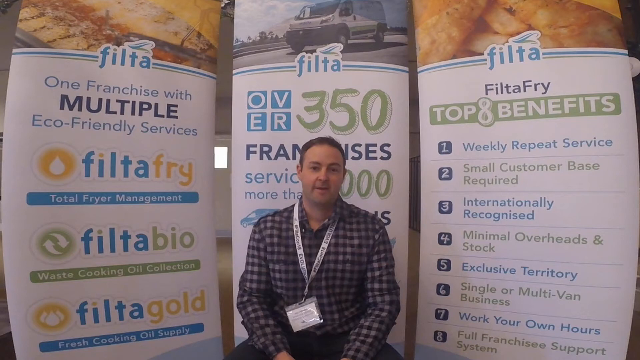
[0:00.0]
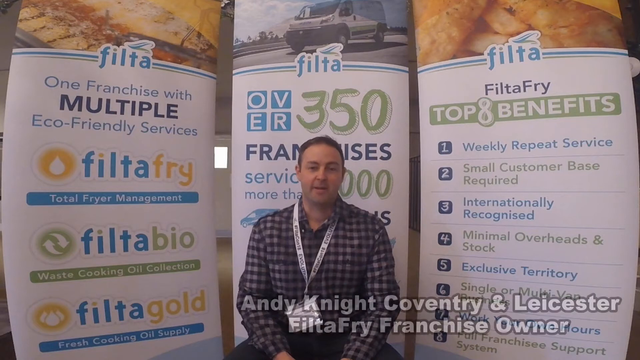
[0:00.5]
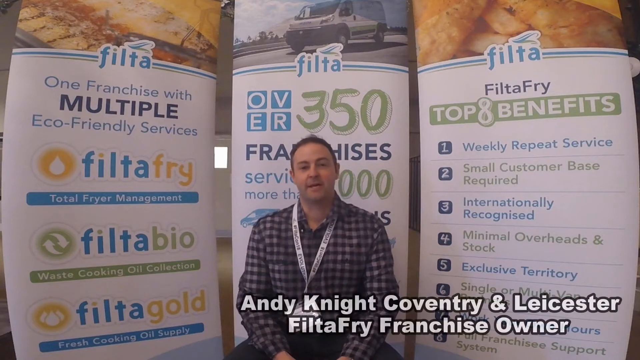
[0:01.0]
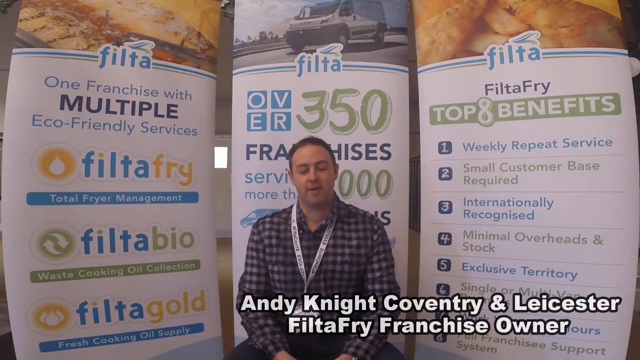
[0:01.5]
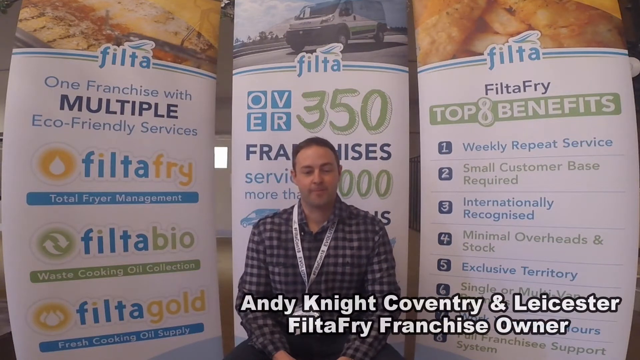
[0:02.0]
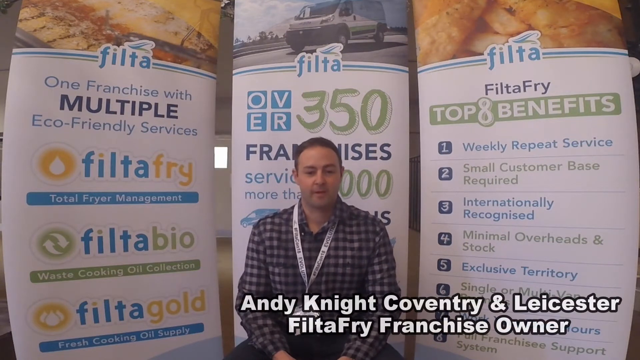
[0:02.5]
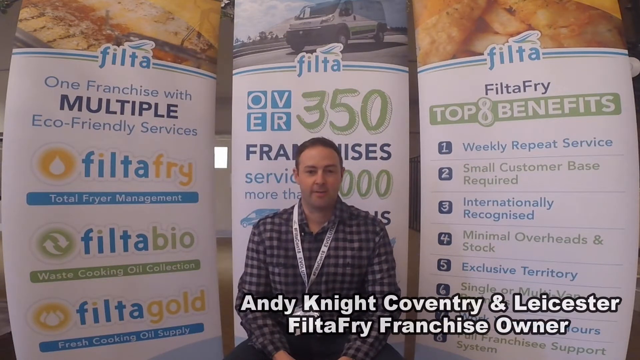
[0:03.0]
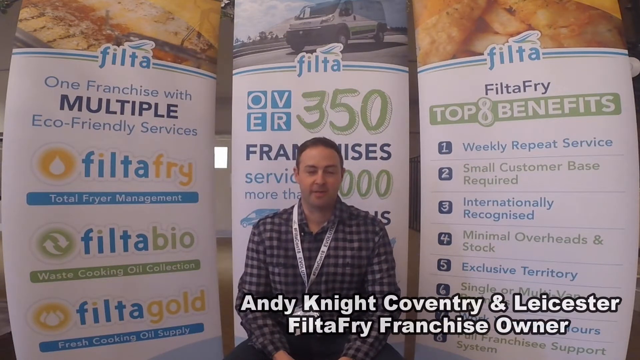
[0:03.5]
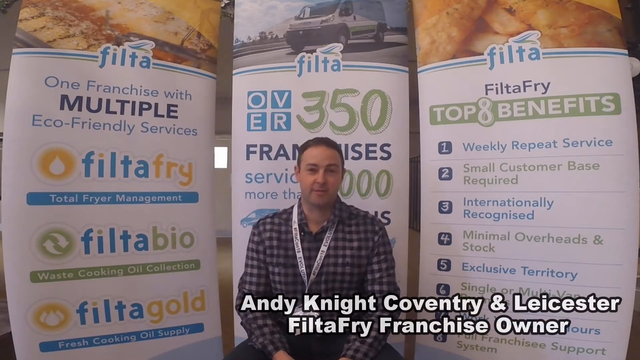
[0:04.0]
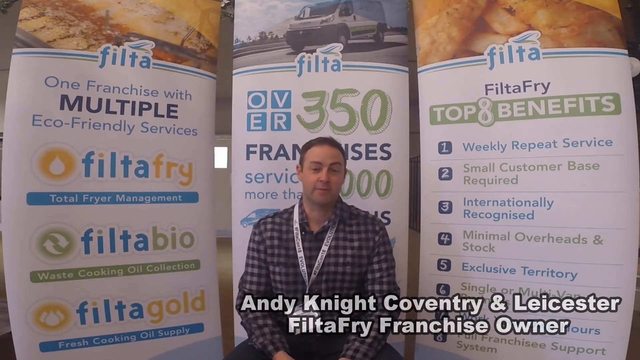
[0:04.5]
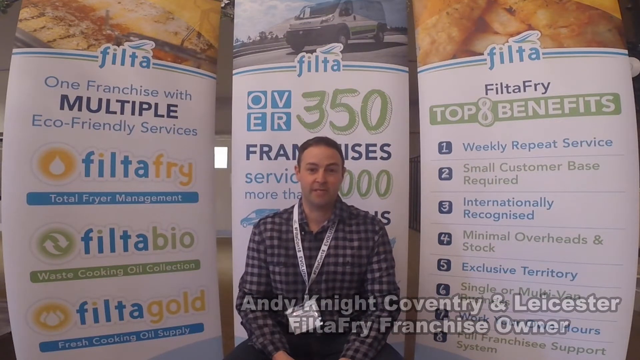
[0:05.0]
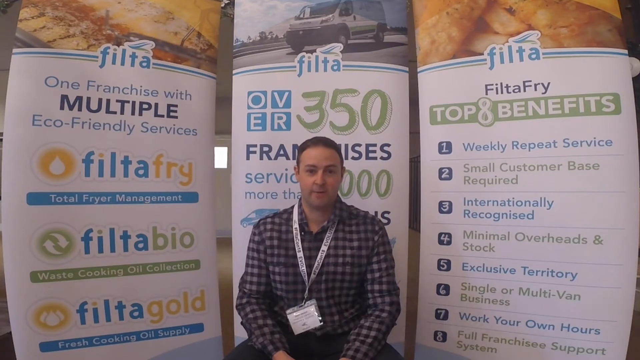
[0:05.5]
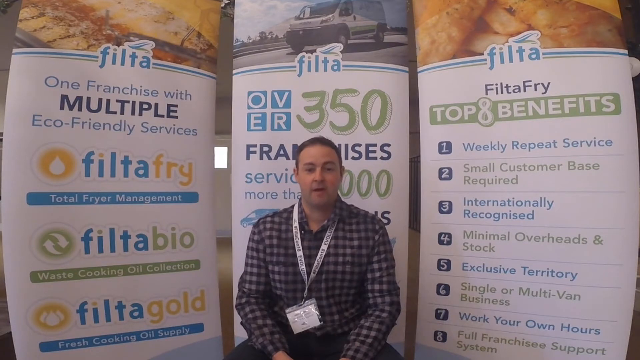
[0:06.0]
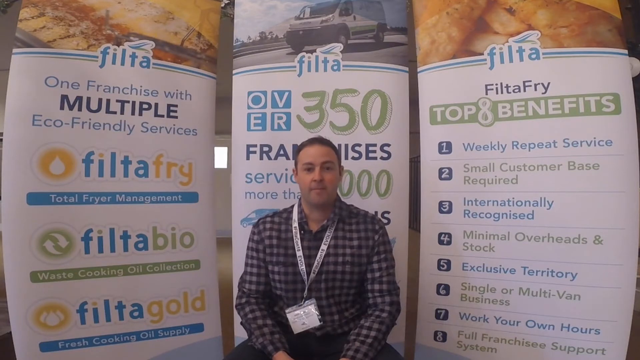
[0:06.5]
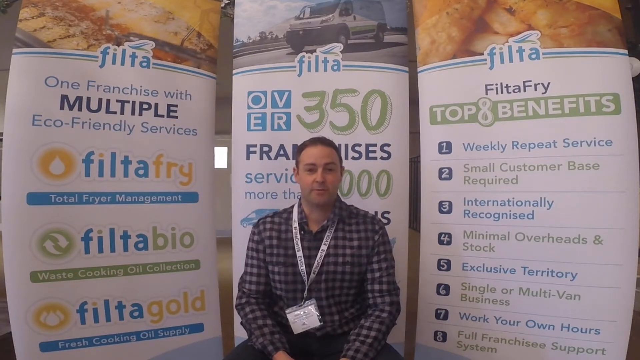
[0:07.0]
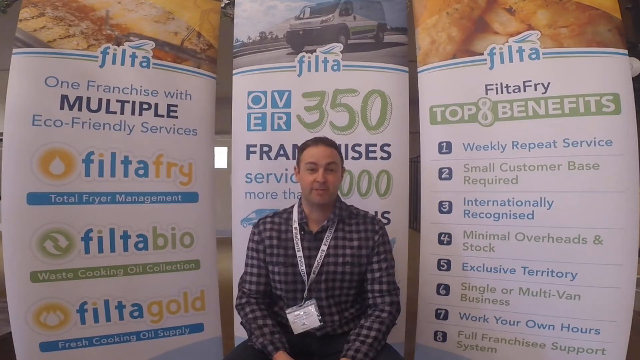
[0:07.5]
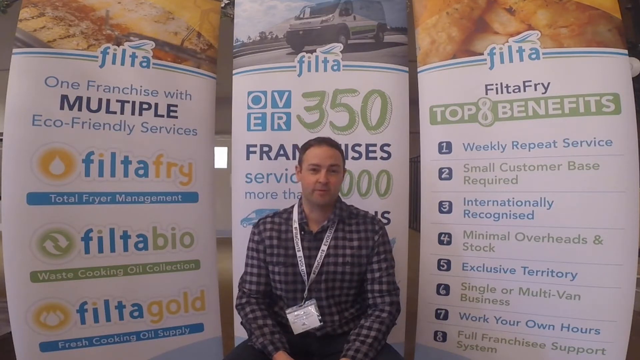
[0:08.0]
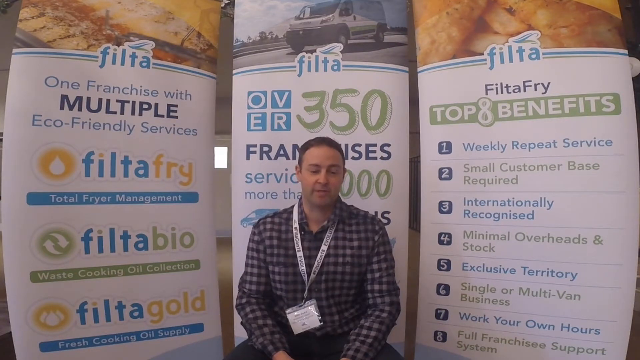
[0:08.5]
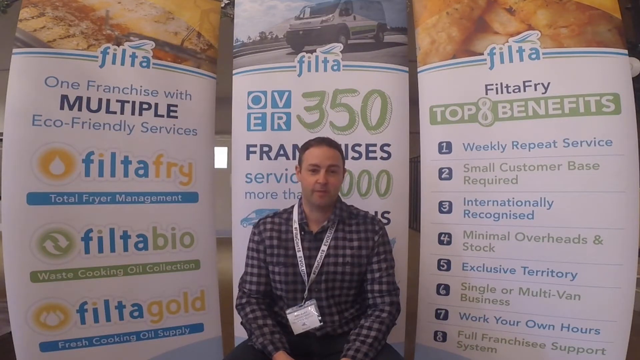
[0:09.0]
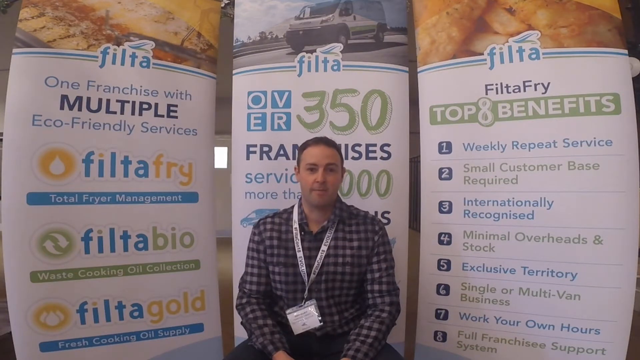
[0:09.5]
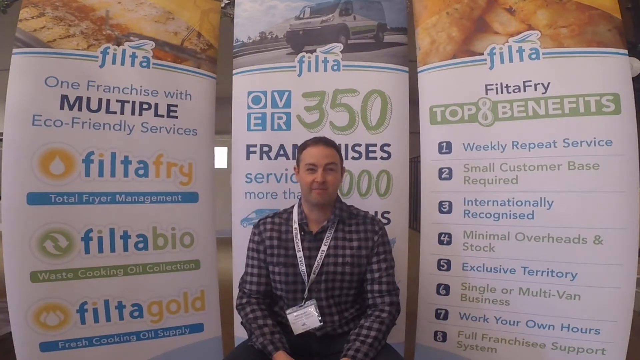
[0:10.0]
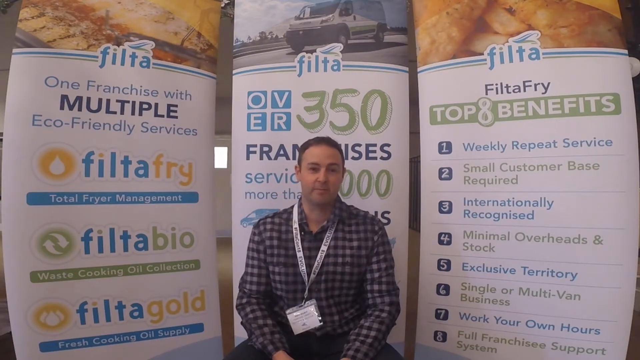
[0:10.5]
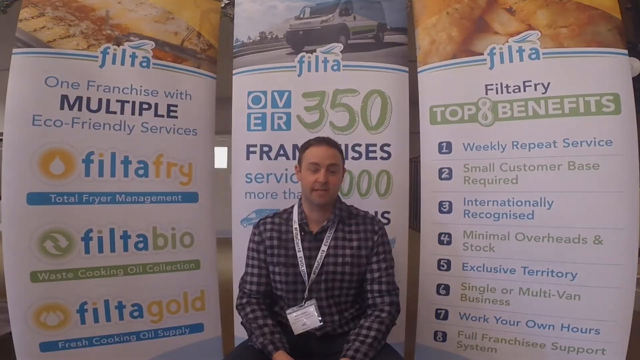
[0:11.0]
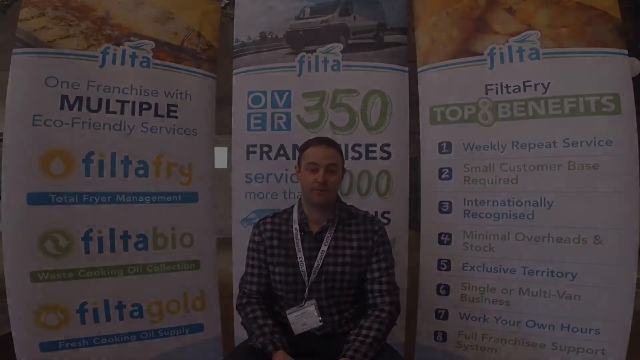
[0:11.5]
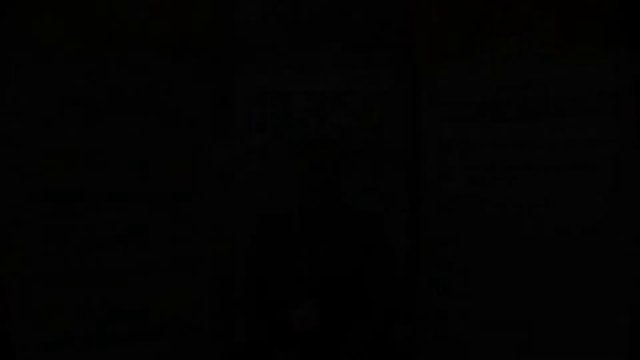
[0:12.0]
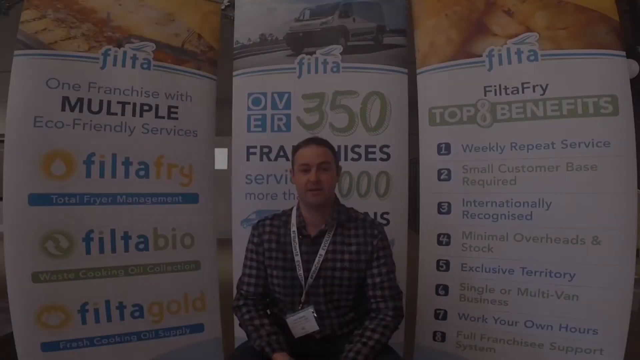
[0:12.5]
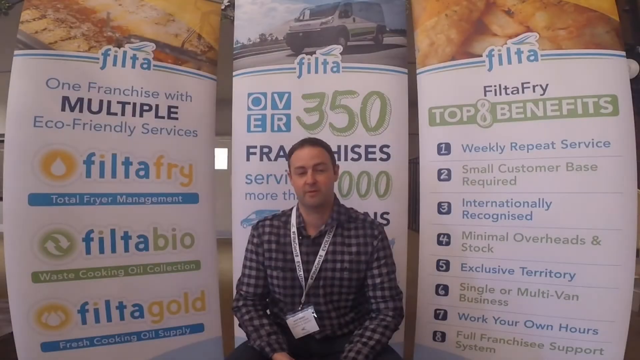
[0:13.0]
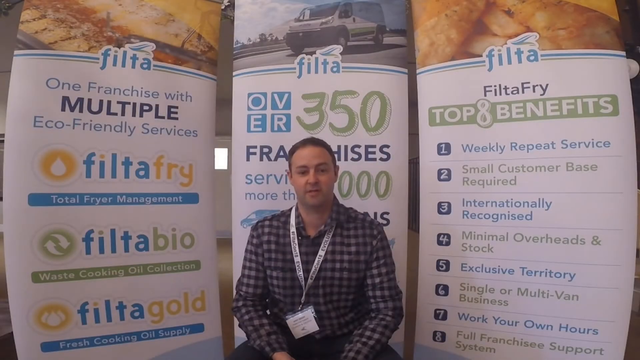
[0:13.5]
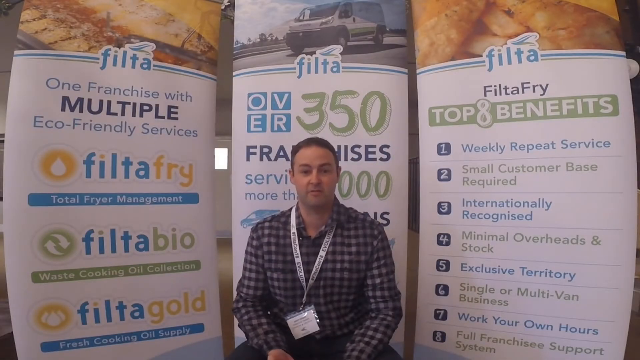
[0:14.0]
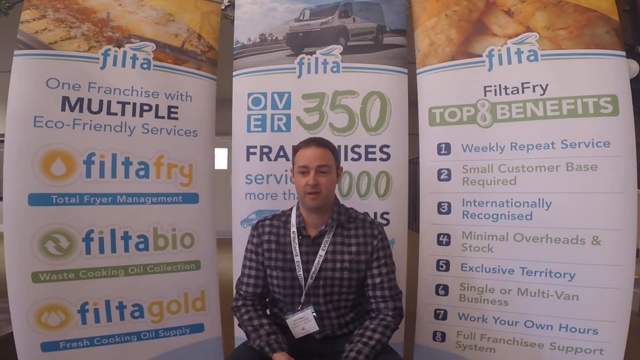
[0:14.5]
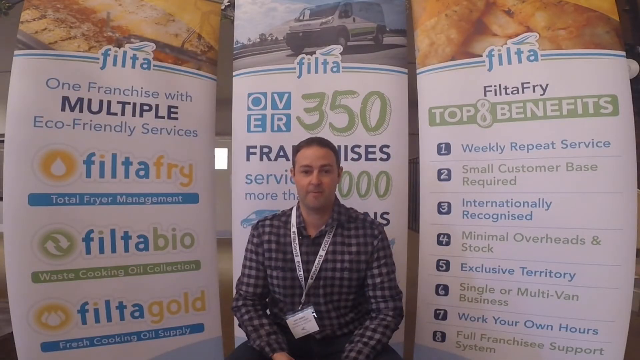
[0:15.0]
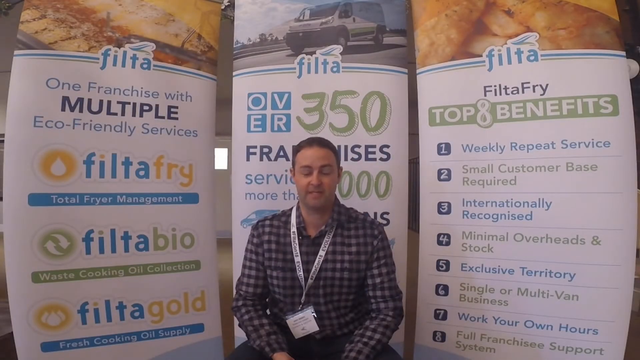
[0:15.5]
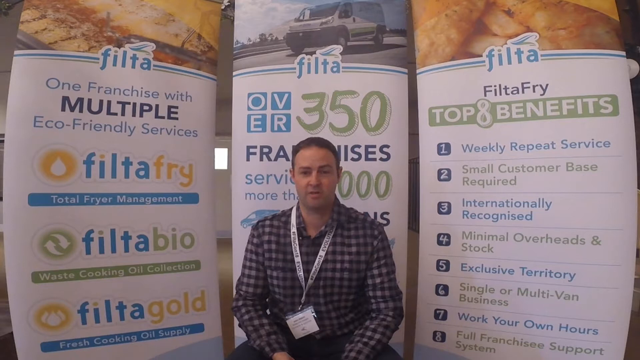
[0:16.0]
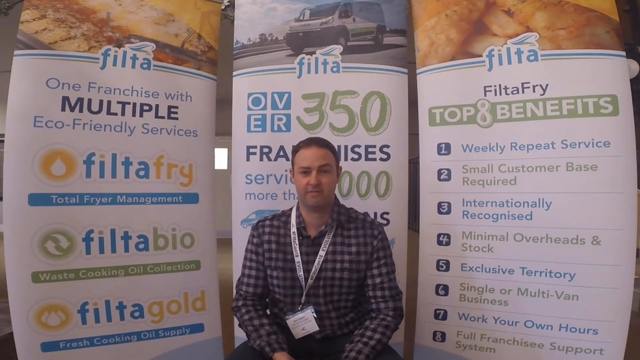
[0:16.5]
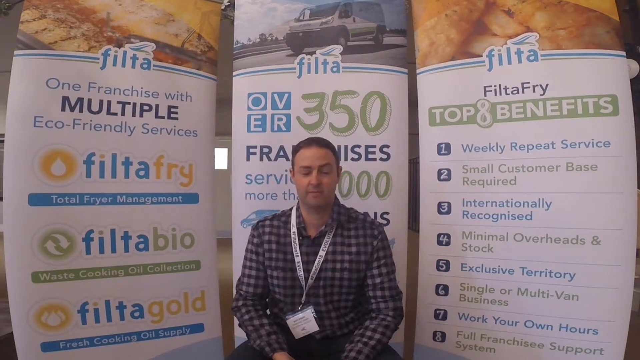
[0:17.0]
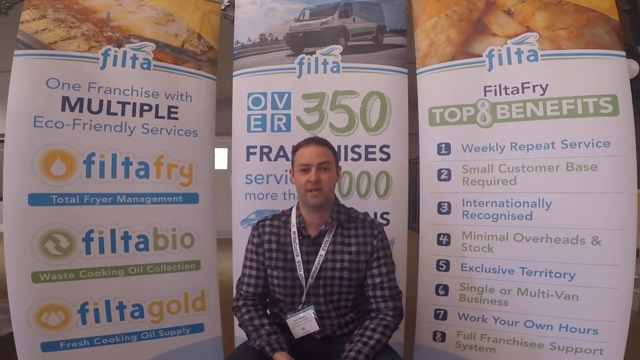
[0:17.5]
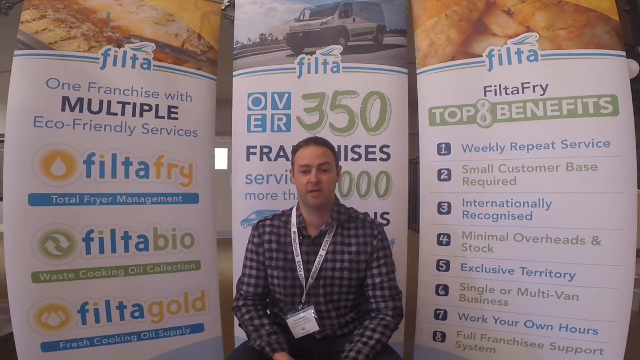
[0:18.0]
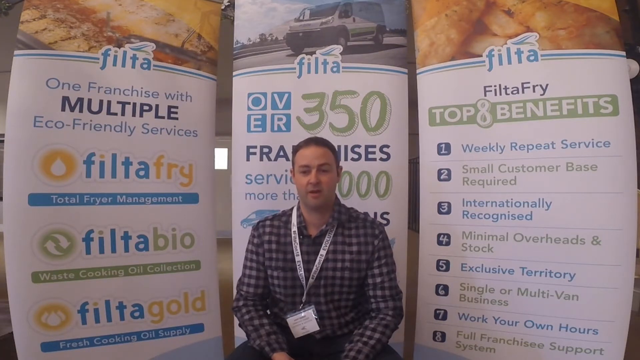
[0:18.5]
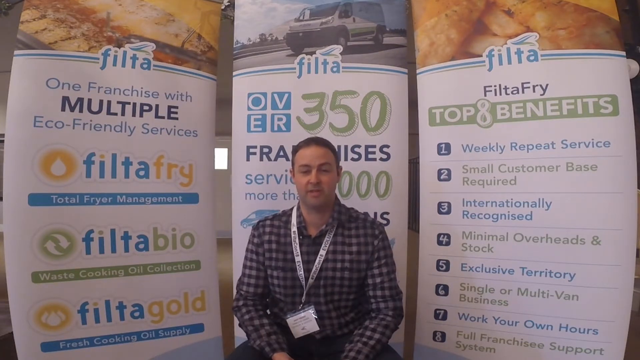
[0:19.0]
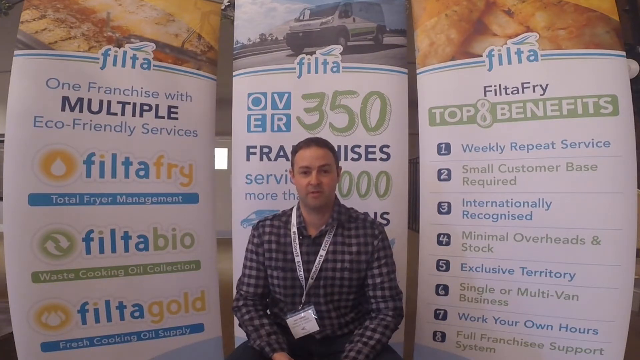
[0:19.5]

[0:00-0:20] A man identified as Andy Knight, Coventry and Leicester Filtafry franchise owner, talks while three different backgrounds are shown. One reads "Filtafry, one franchise with multiple eco-friendly services," listing "Filtafry total fryer management," "Filtabio waste cooking oil collection," and below that "Filtagold," followed by "Filta, over 350 franchises, serve more than thousands of locations." Another reads "Filtafry top 8 benefits": number one "weekly repeat service," number two "small customer base required," number three "internationally recognized," number four "minimal overheads in stock," number five "exclusive territory," number six "single or multi-van business," number seven "work do your own hours," and number eight "full franchisee support."